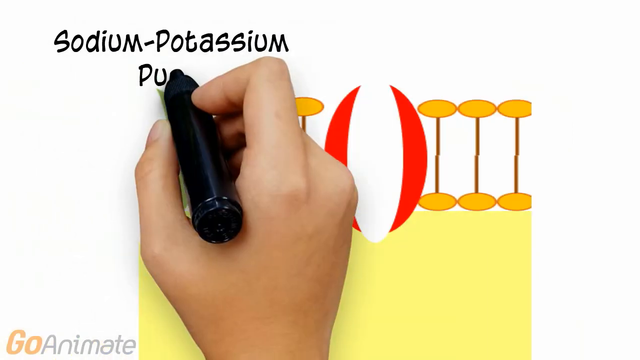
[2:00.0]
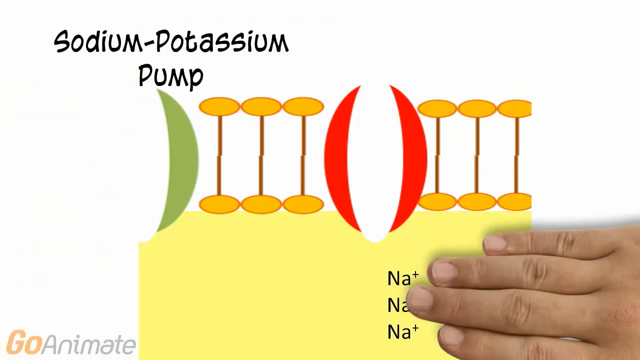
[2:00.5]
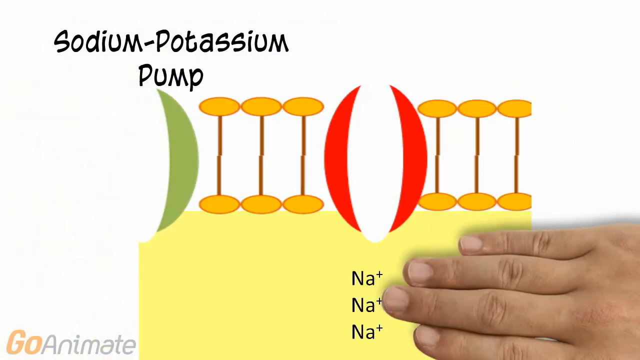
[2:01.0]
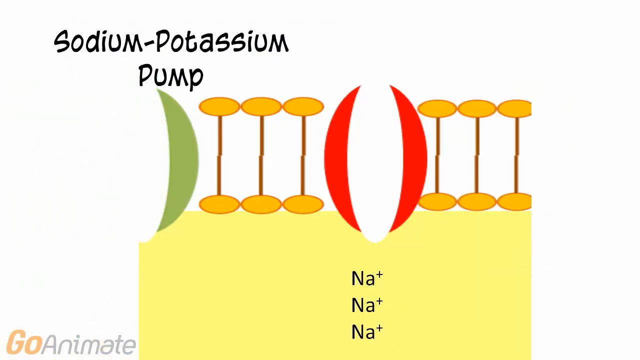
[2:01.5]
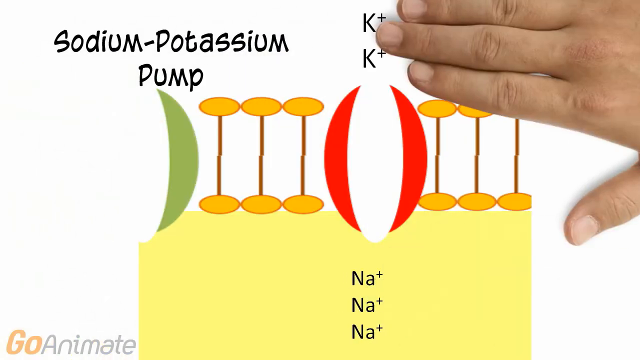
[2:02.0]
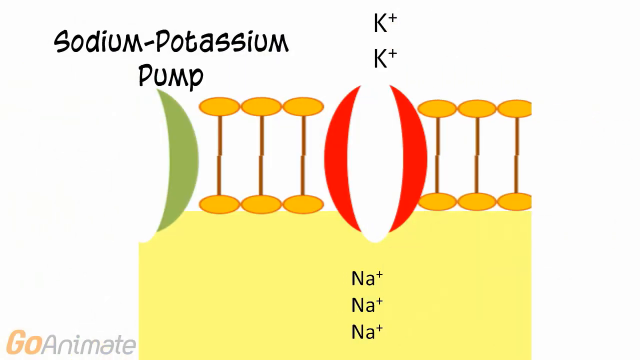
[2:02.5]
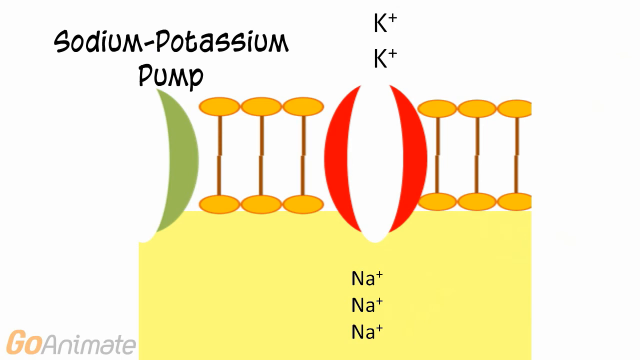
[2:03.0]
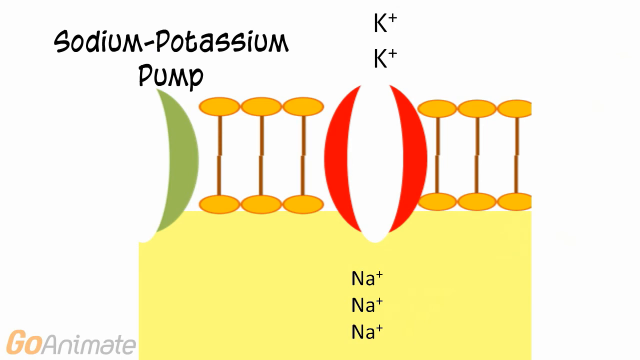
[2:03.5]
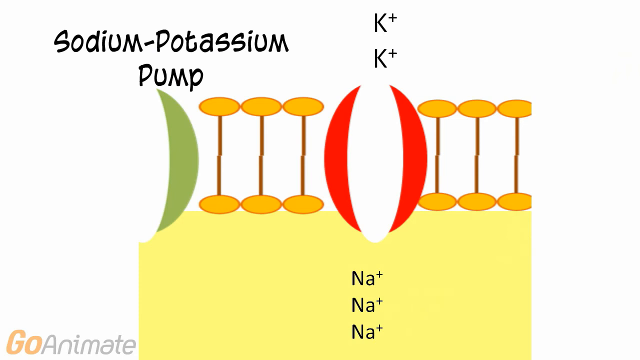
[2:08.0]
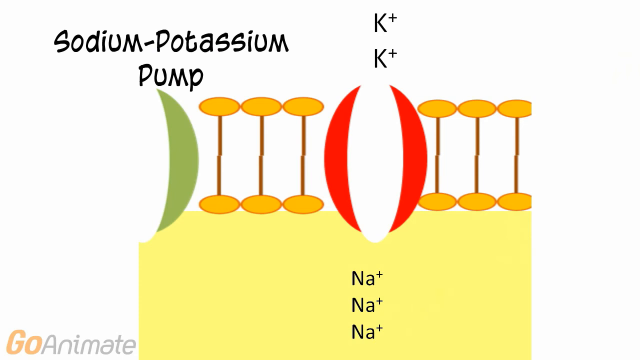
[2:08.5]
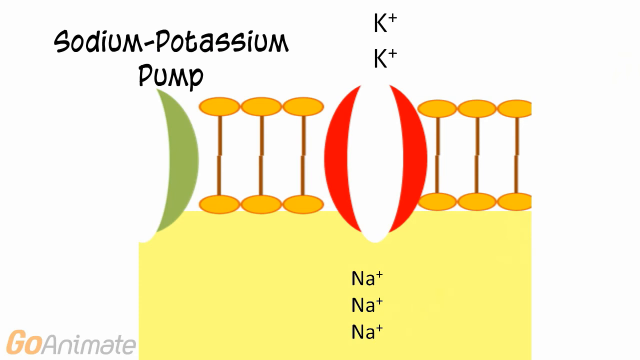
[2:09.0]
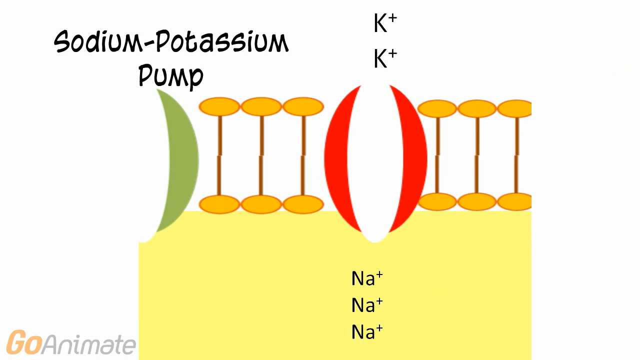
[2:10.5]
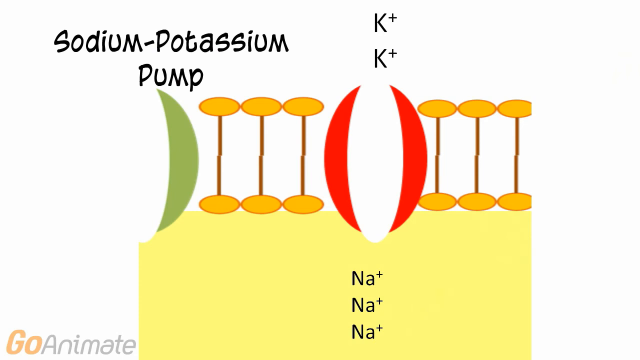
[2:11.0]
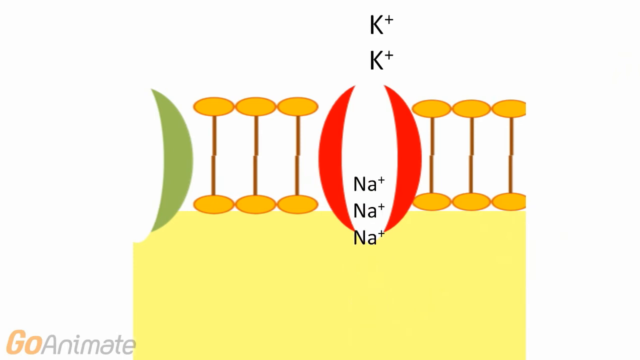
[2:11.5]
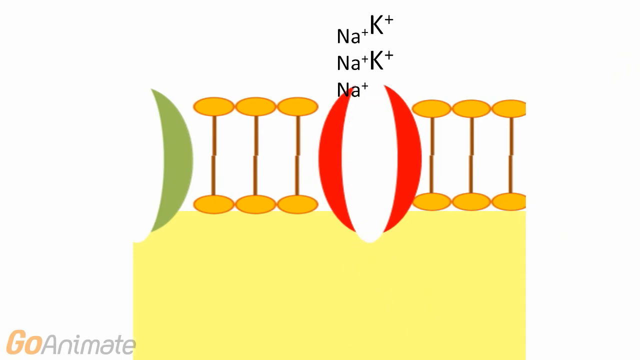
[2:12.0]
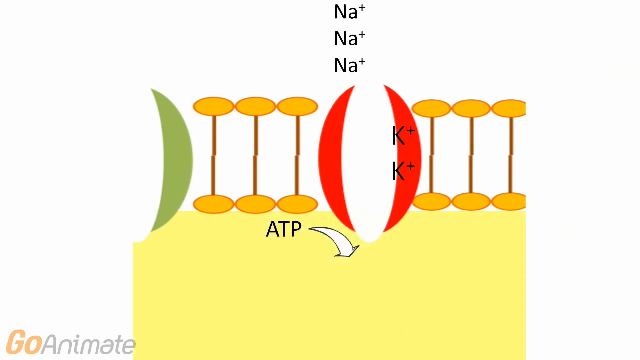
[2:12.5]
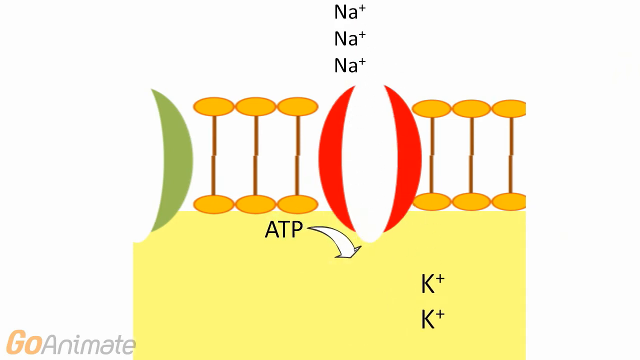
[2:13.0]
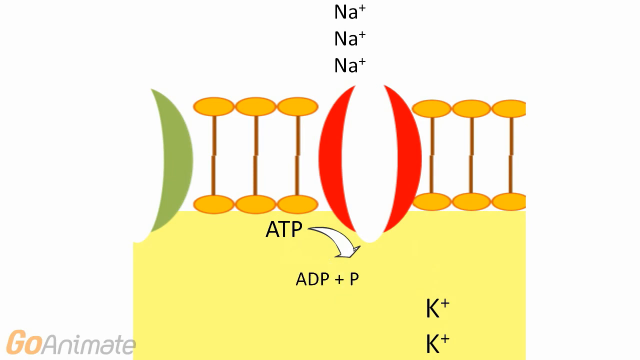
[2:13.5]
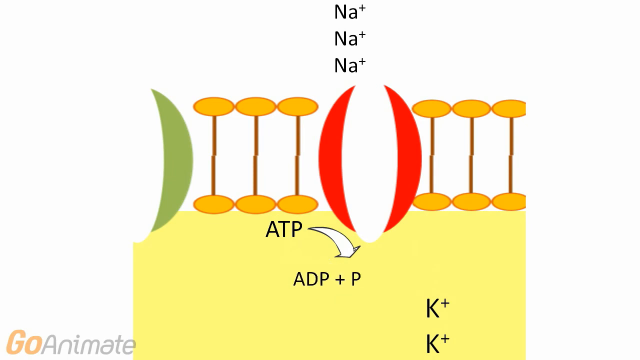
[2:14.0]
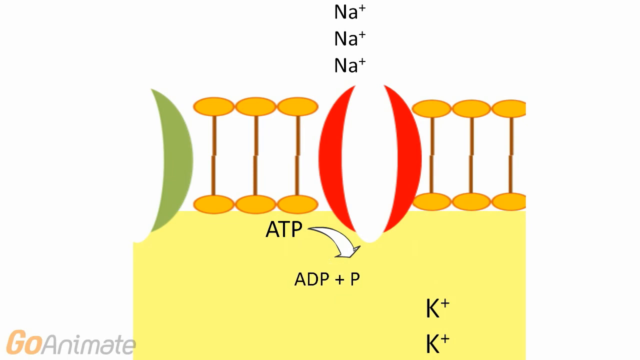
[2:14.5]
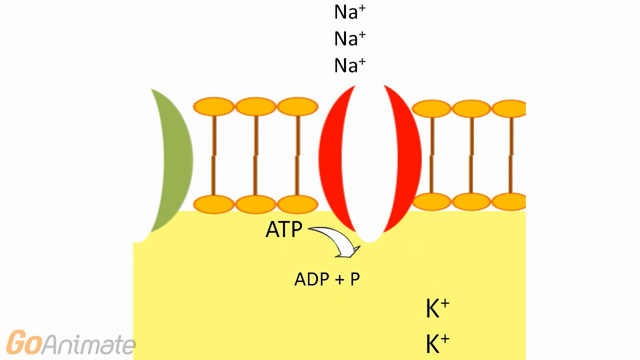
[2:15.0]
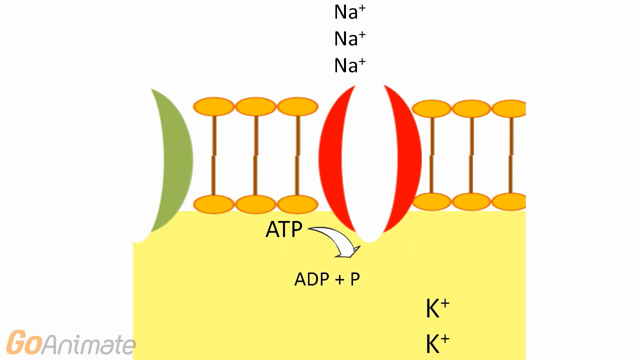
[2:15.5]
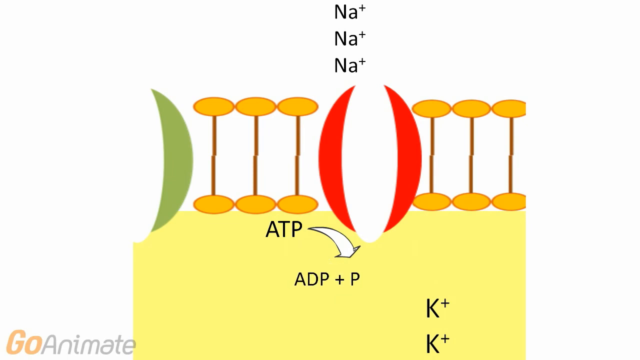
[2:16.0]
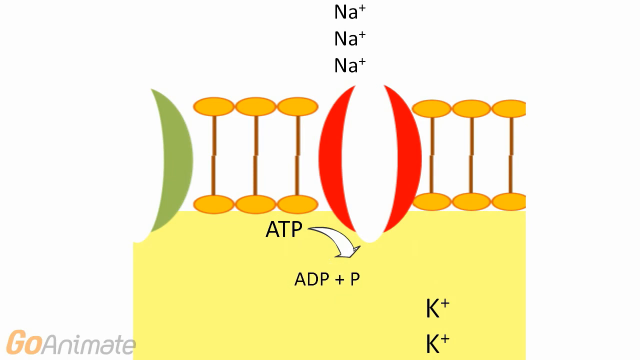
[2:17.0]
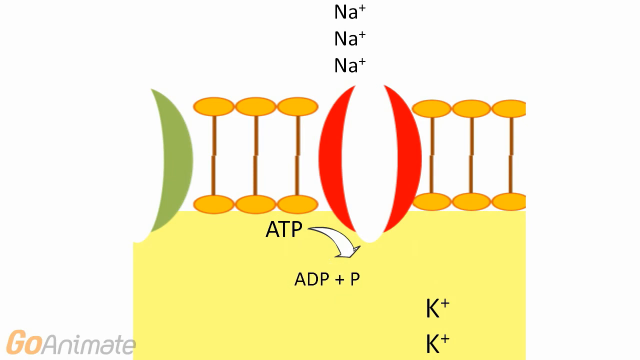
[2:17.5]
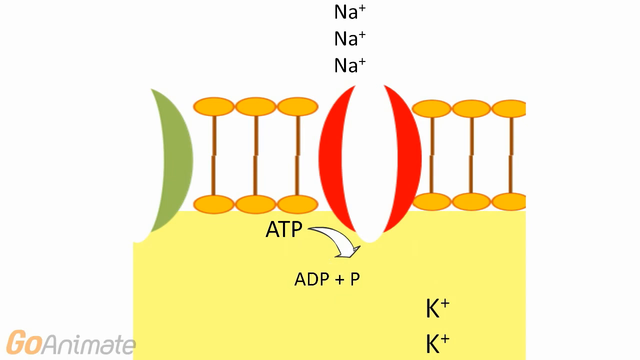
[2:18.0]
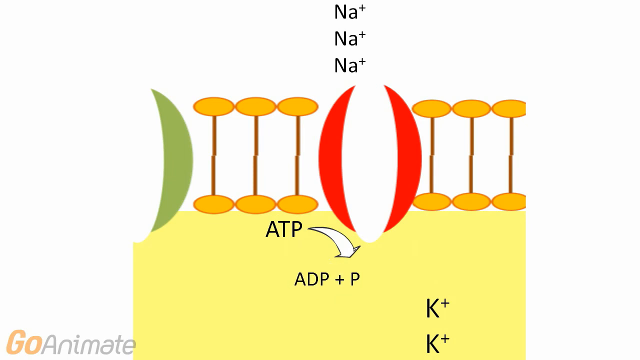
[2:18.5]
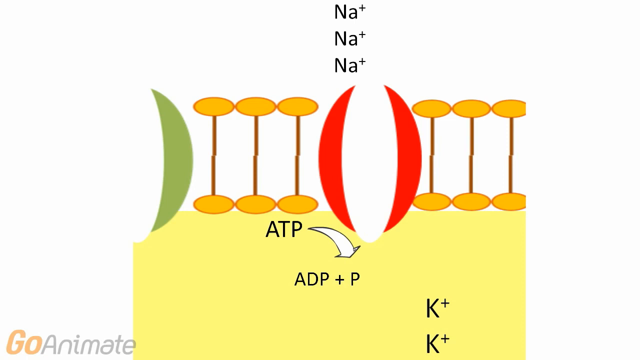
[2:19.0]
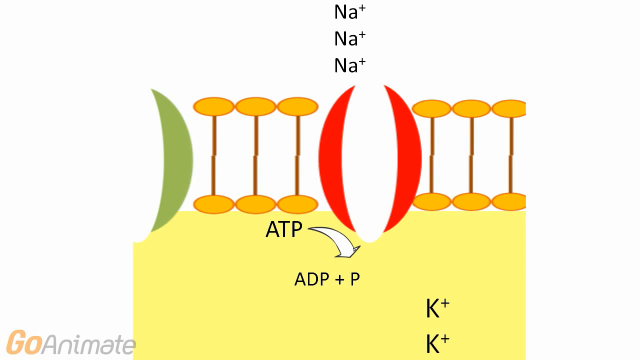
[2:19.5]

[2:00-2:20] A partial drawing of the neuron shows a yellow rectangle at the bottom, a single side of the green parenthesis (its right-hand side), and two sets of three vertical lines, each with an orange oval at either end. Between these sets is another parenthesis-shaped object with red sides. Someone's right hand, holding a black marker, is in front of it and writes the words "sodium-potassium pump" above it. The hand then moves in from the right-hand side, sliding in a vertical row of Na+ symbols, three sodium molecules, at the bottom, and another vertical row of two K+ symbols for potassium at the top. The sodium drifts up through the opening and the potassium drifts down. Then the letters "ATP" appear on the left-hand side with a white arrow next to them, and below that is "ADP plus P."